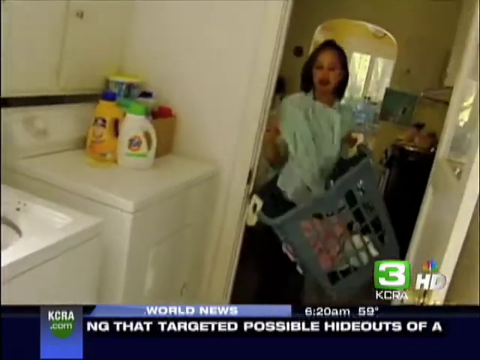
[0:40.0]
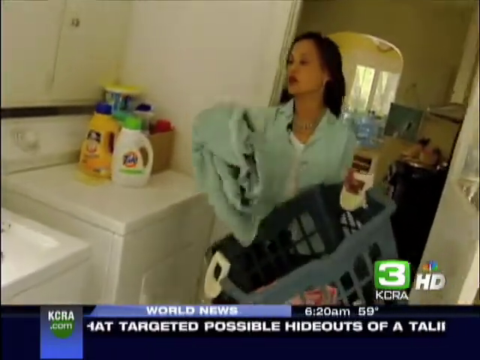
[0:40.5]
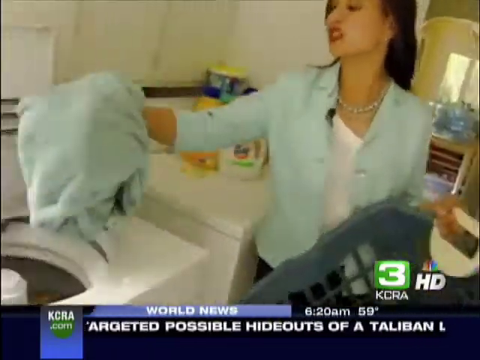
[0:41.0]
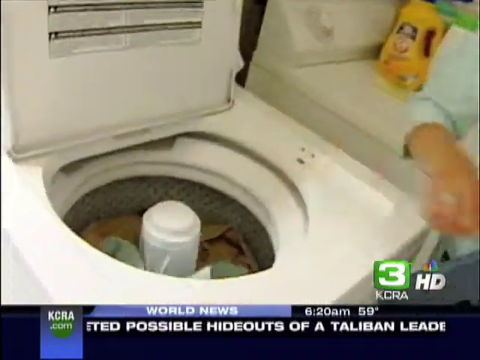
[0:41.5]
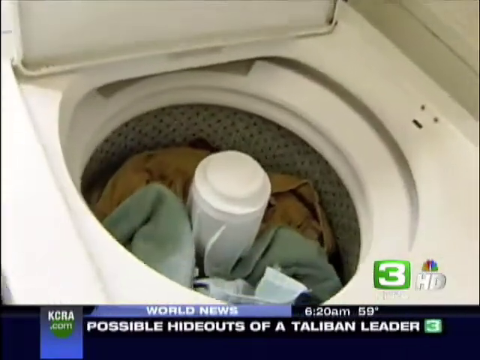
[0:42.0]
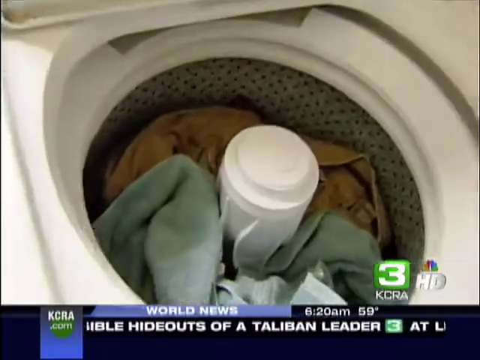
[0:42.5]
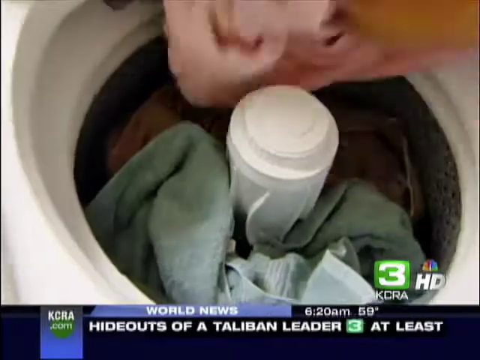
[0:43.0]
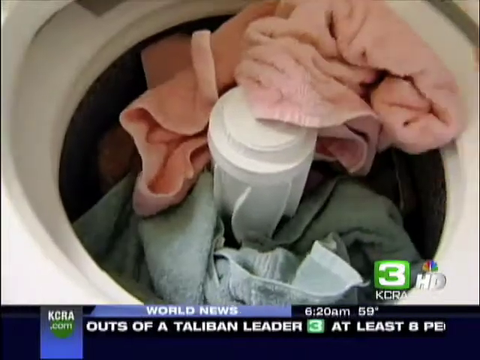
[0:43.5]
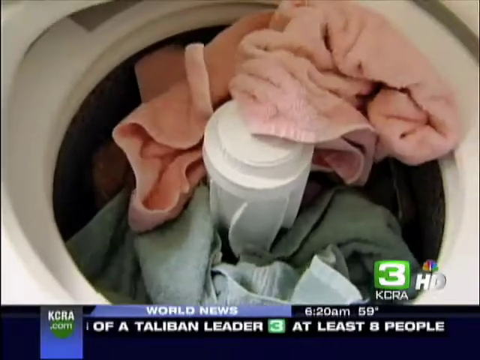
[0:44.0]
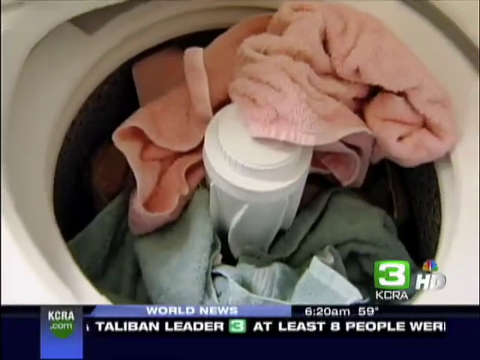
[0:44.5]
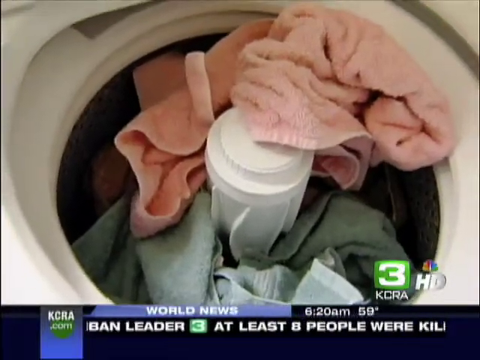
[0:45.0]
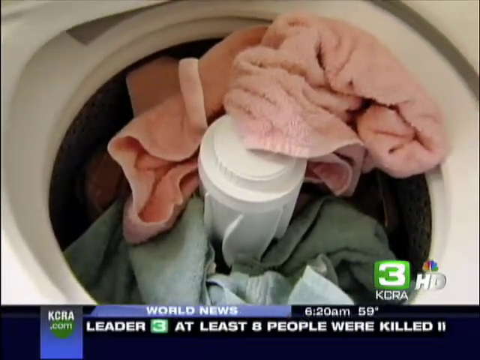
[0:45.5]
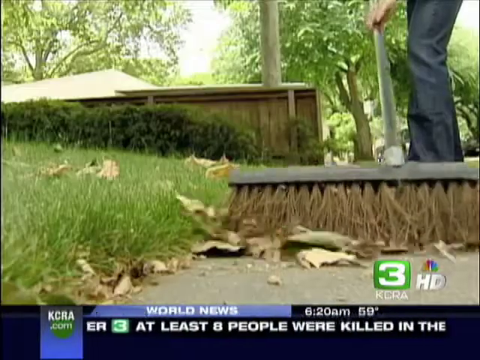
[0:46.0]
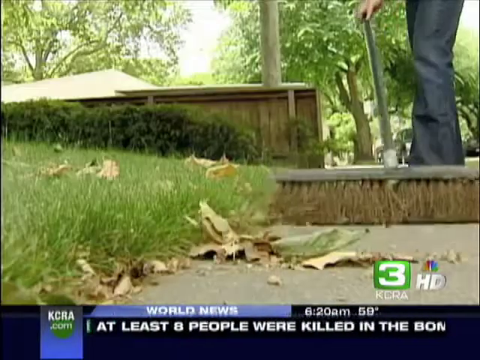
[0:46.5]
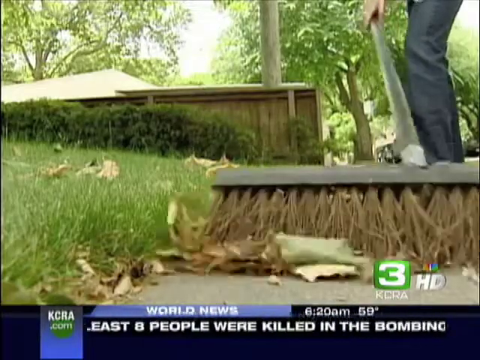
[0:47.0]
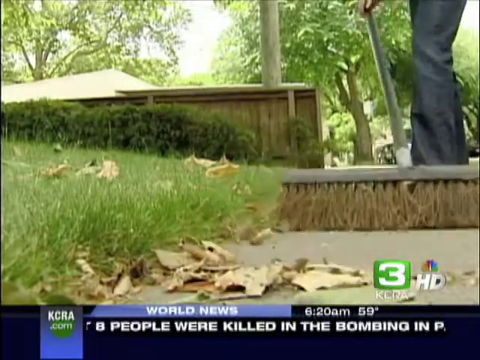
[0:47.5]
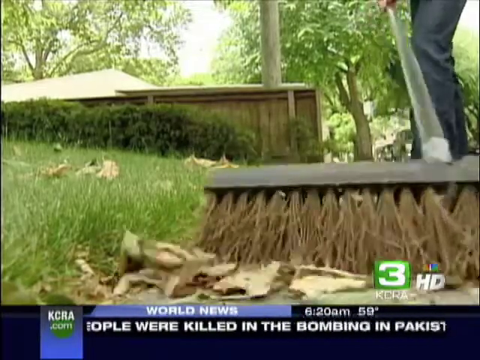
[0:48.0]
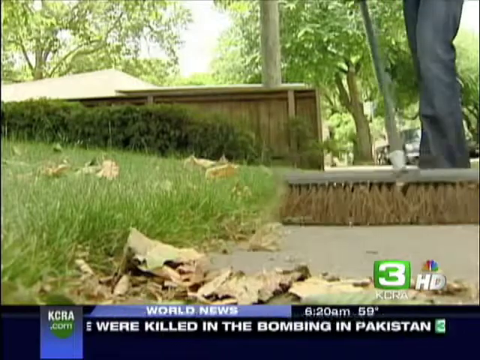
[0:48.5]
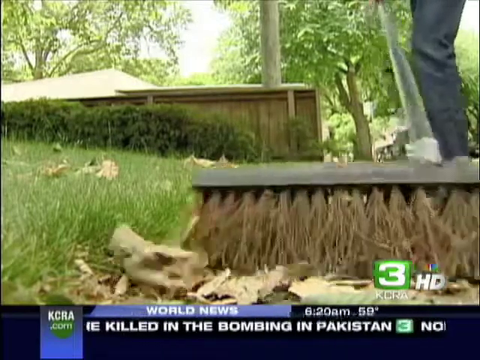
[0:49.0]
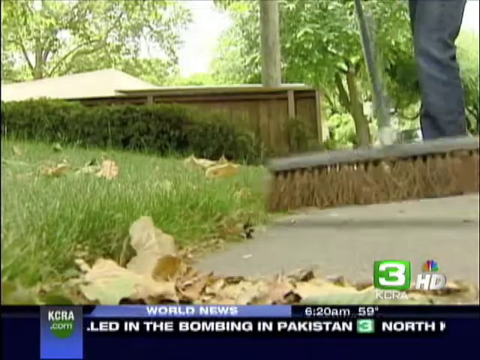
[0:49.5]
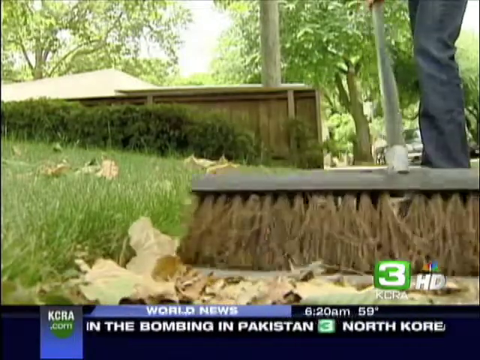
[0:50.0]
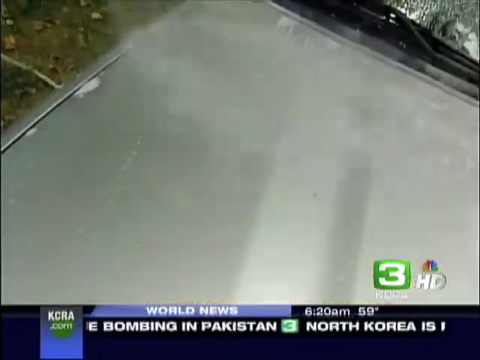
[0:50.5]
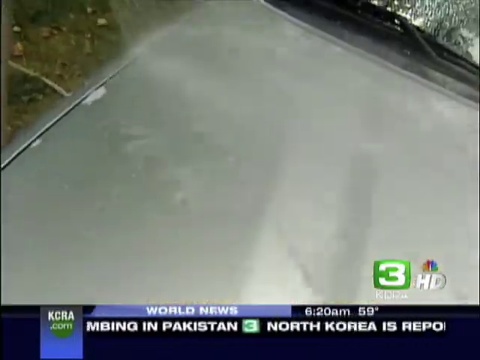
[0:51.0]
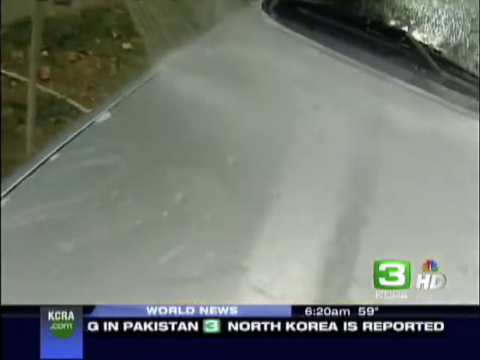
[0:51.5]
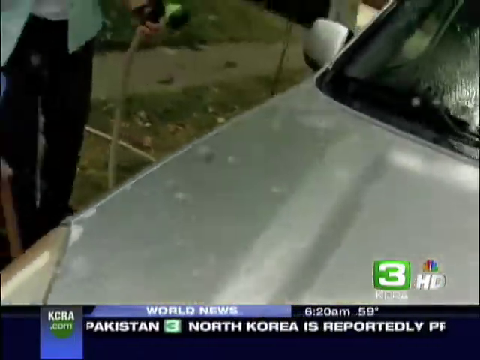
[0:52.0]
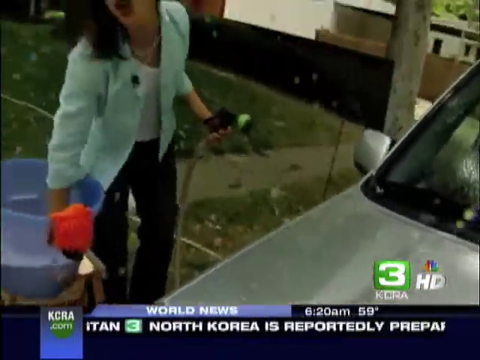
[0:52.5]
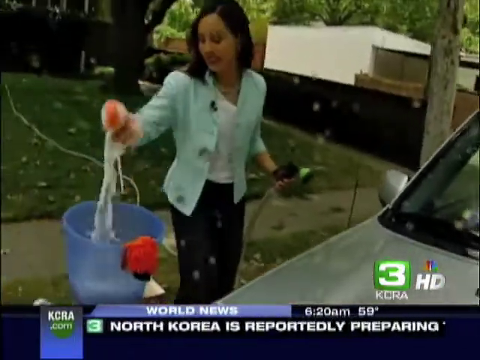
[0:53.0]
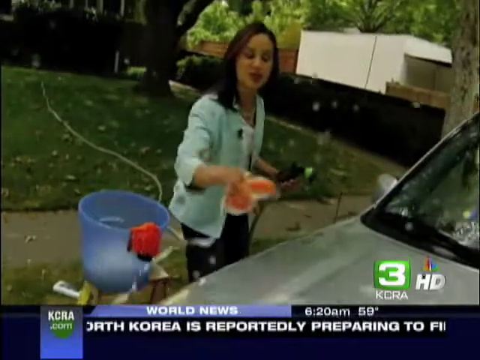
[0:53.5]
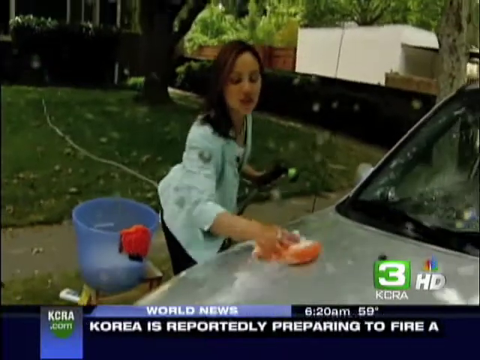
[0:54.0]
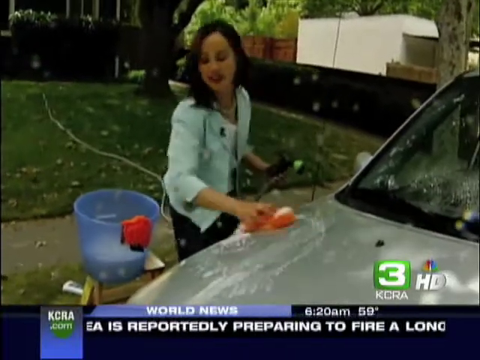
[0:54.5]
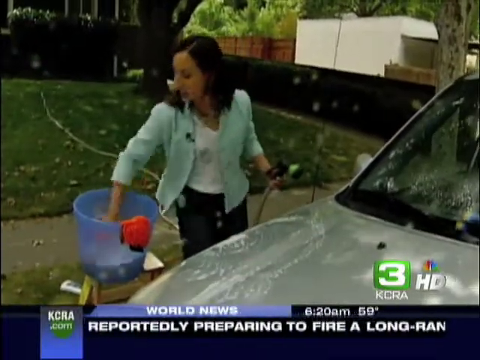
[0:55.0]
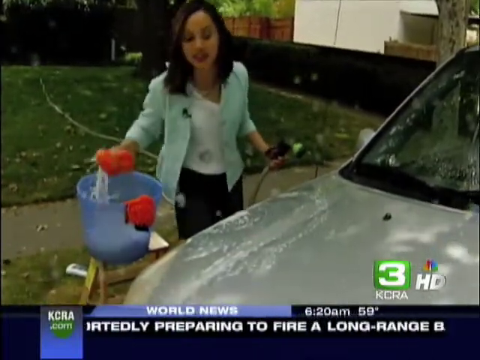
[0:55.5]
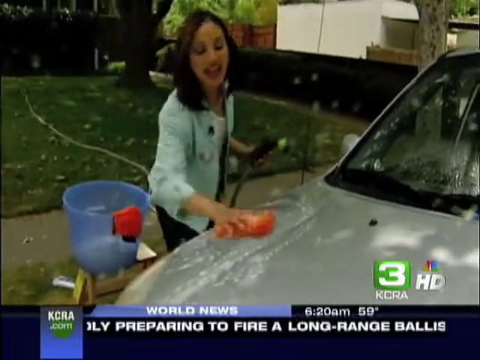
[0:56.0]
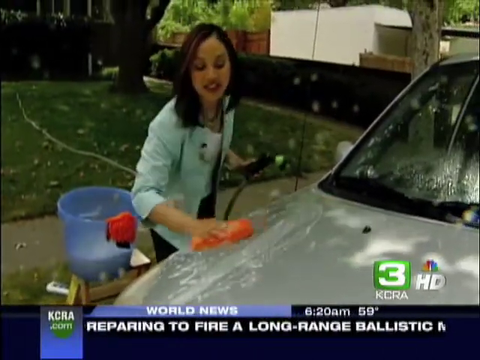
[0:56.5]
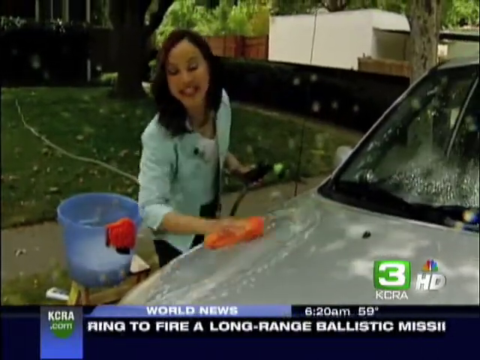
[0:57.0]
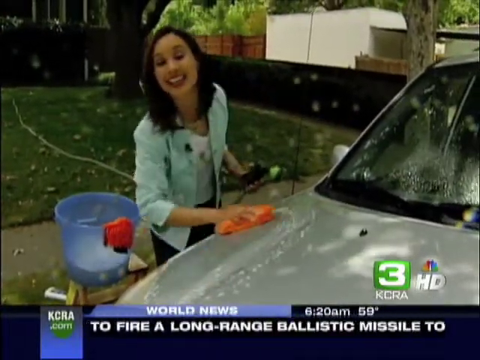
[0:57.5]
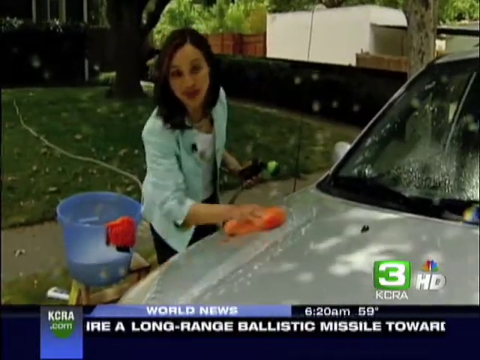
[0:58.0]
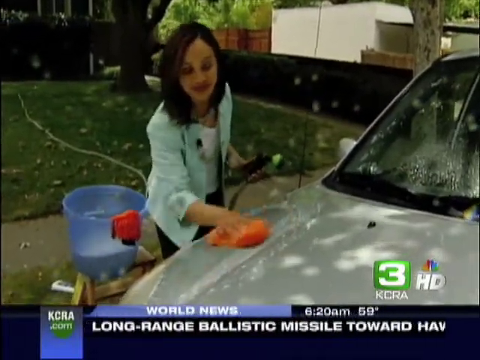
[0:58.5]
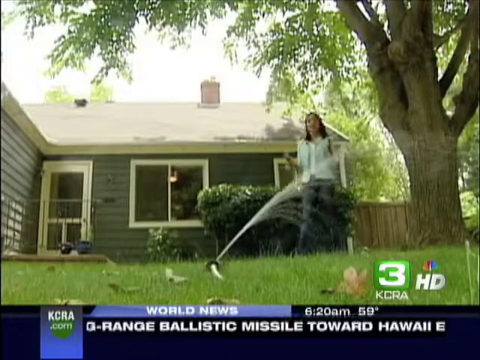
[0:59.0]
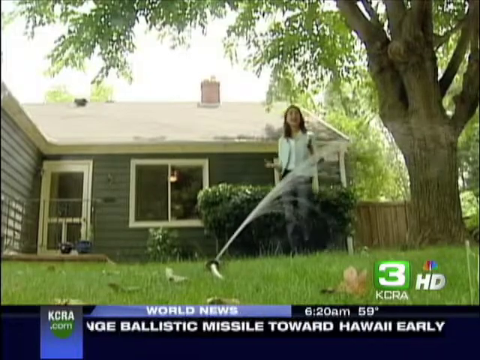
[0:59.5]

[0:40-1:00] The woman in the blue blazer takes the laundry, a blue towel and a pink towel, out of her big grayish basket and puts it straight into the washer or dryer. A man is then sweeping the floors outside, and the woman washes the floor, spraying it with a hose. She then has a little bucket and a little sponge and scrubs her car with it, washing it; the car is gray with wet windshields. A little sprinkler is on in the yard, watering the garden. The woman stands behind it, gesturing with her hands, pointing and talking. She still wears the blue blazer with the white blouse, along with dark jeans. Conserving water seems to be the main topic of the video.